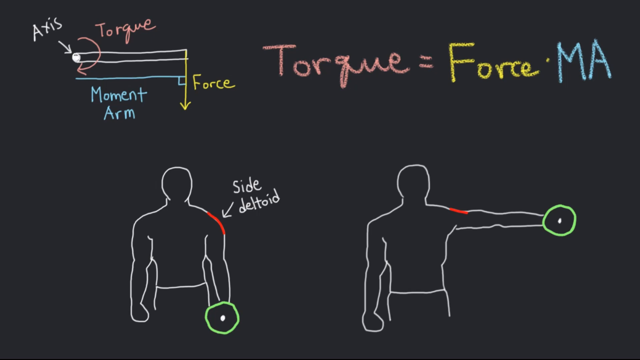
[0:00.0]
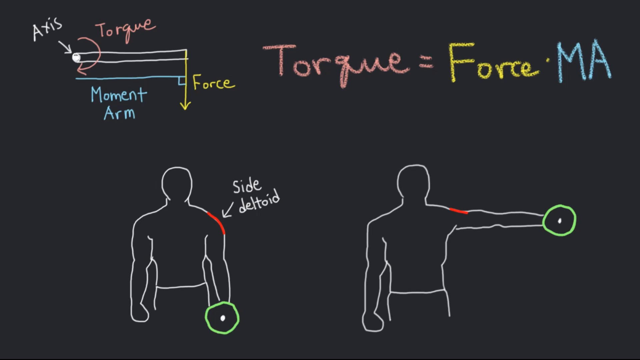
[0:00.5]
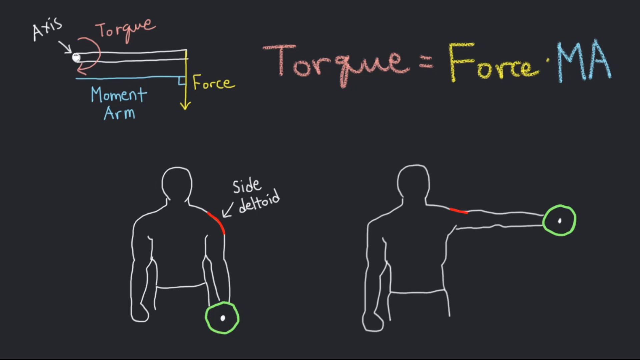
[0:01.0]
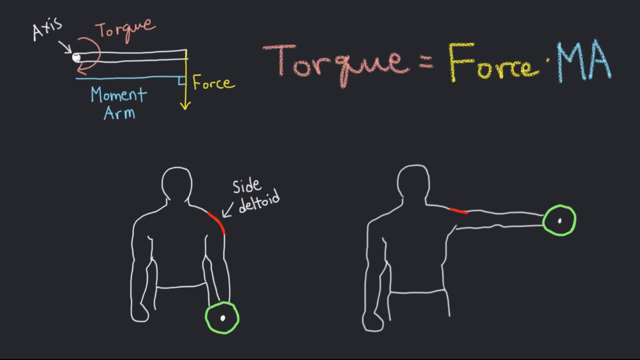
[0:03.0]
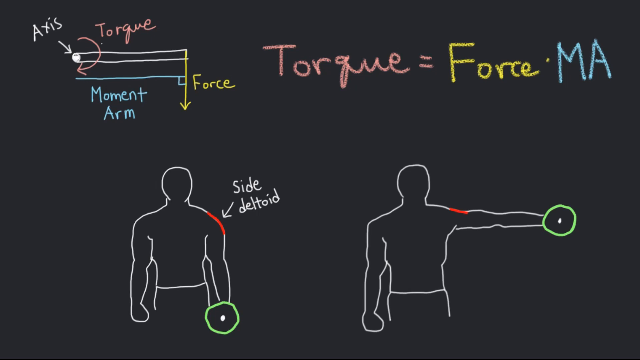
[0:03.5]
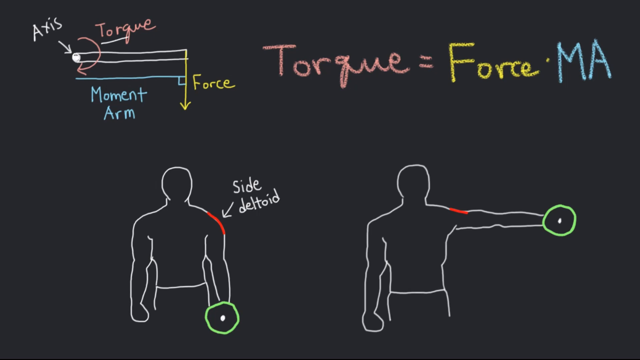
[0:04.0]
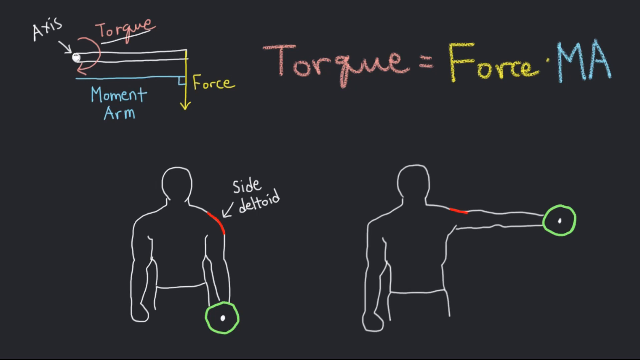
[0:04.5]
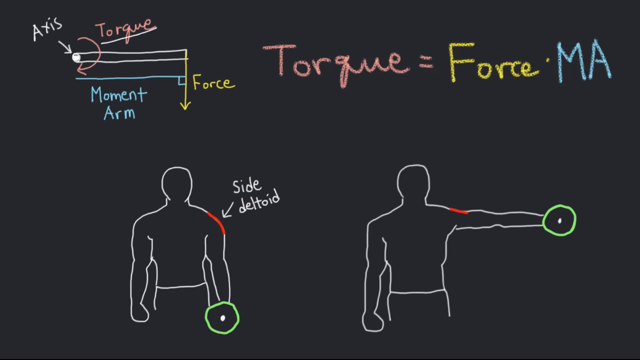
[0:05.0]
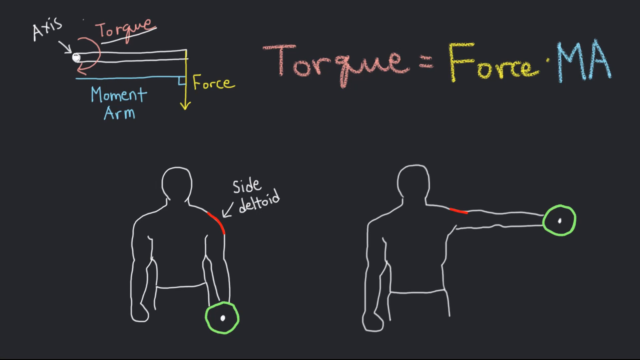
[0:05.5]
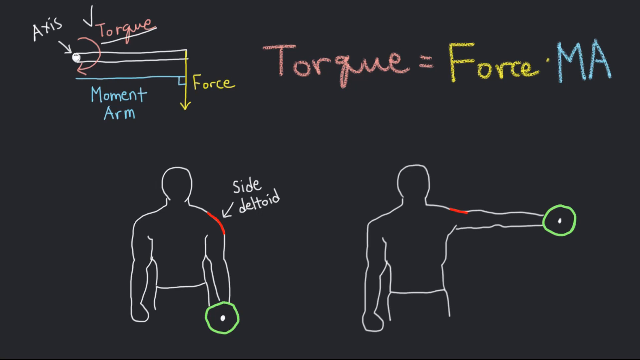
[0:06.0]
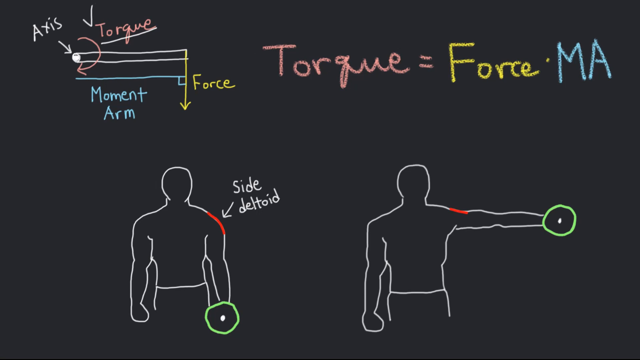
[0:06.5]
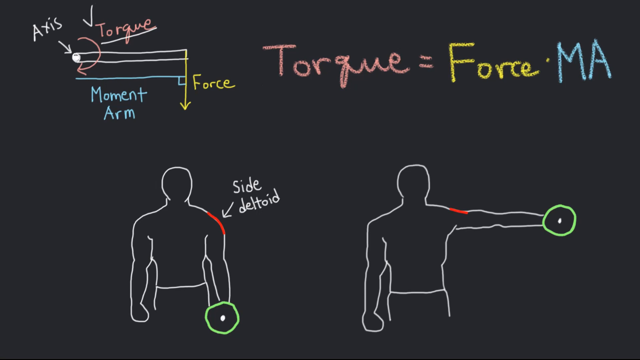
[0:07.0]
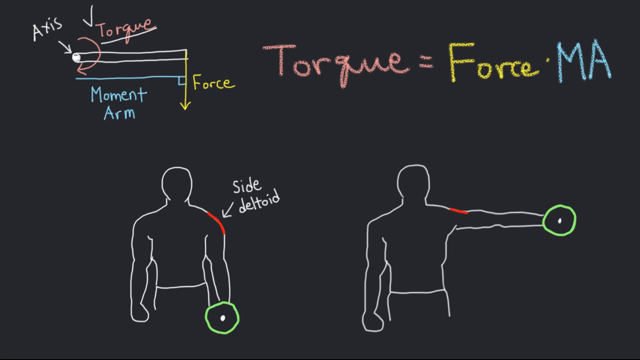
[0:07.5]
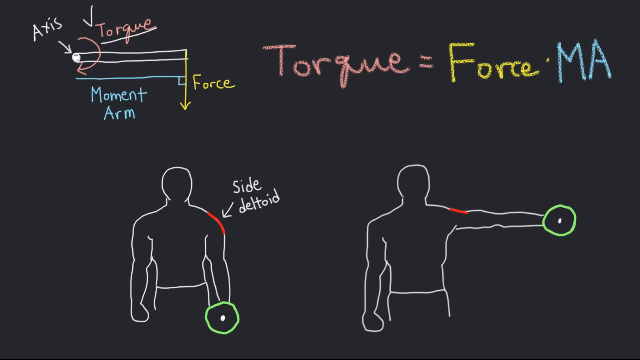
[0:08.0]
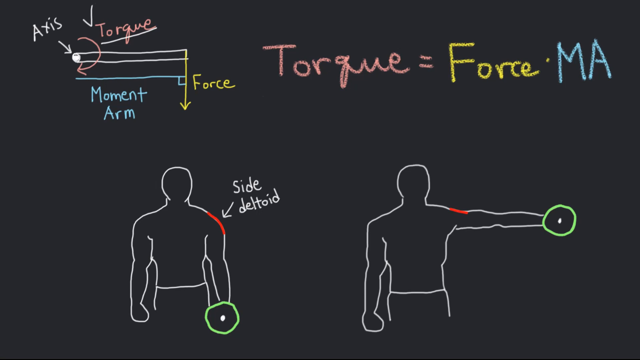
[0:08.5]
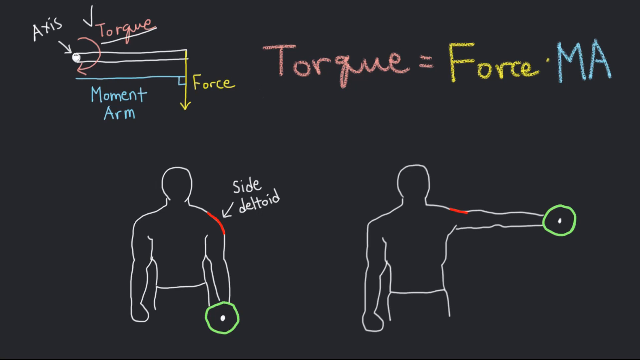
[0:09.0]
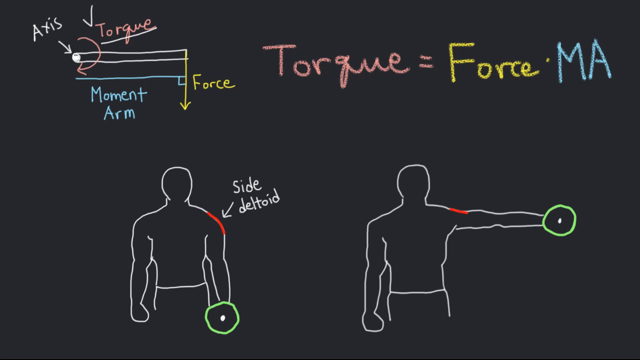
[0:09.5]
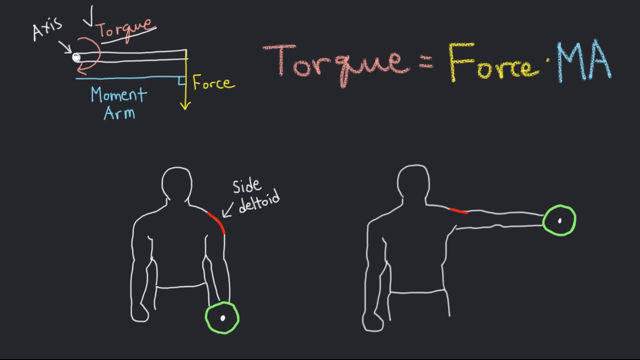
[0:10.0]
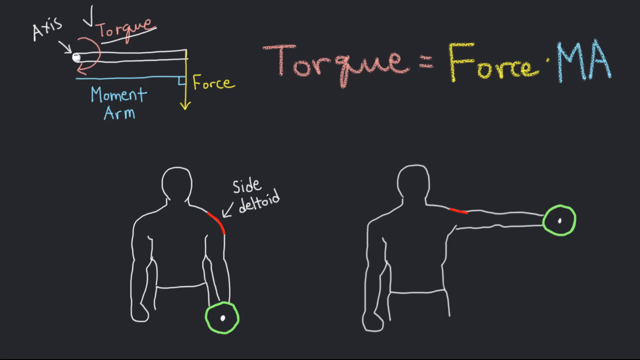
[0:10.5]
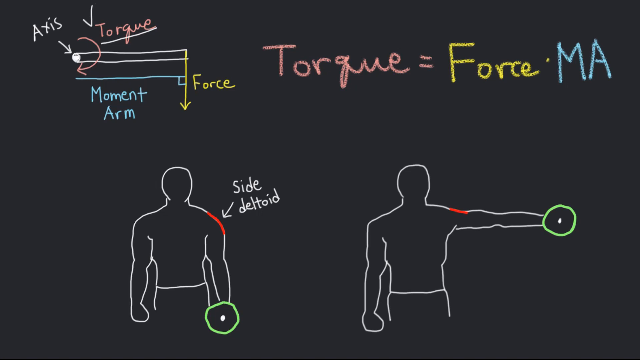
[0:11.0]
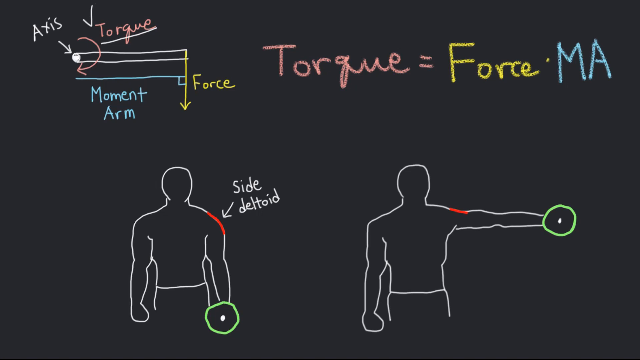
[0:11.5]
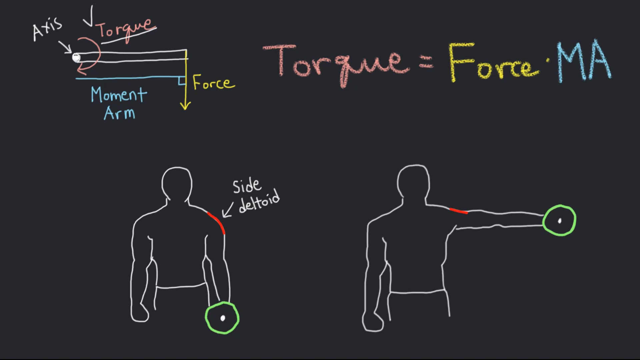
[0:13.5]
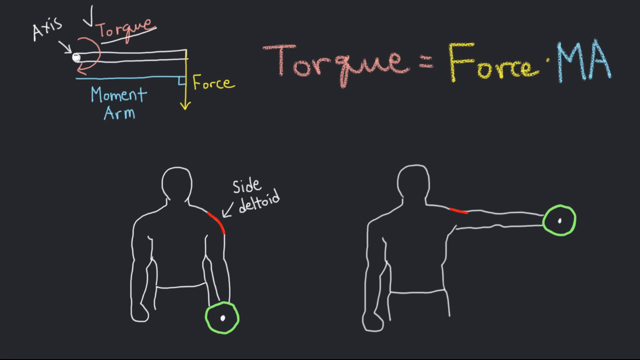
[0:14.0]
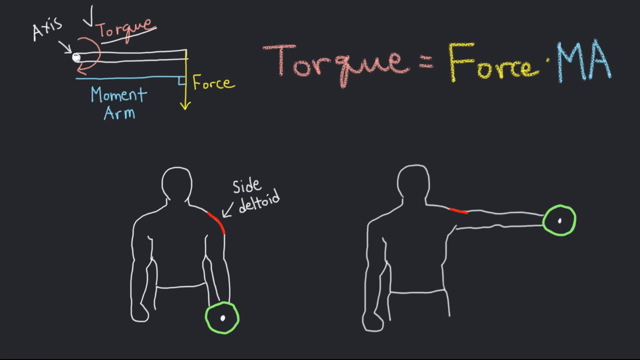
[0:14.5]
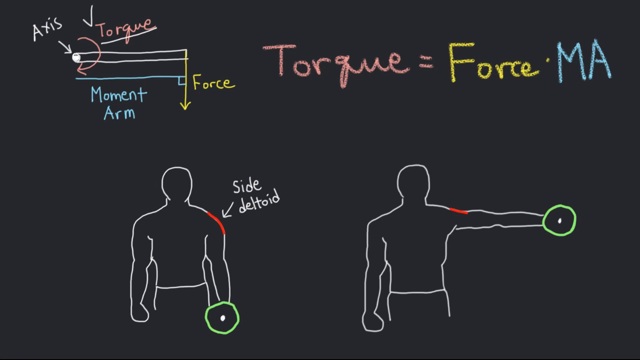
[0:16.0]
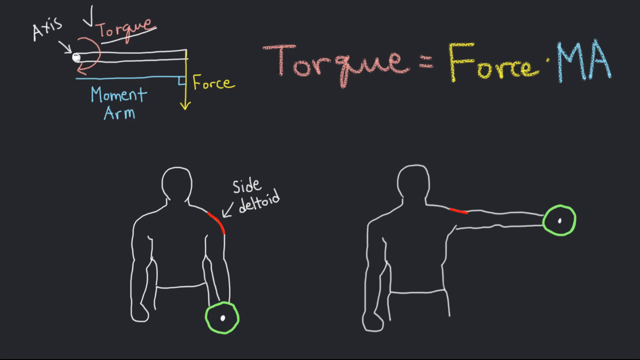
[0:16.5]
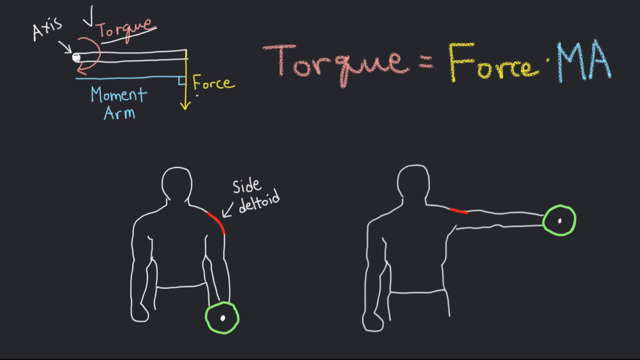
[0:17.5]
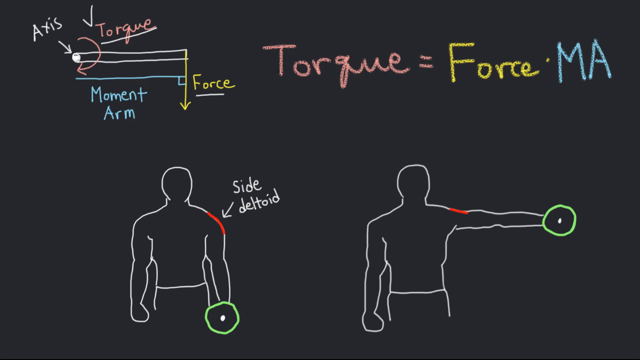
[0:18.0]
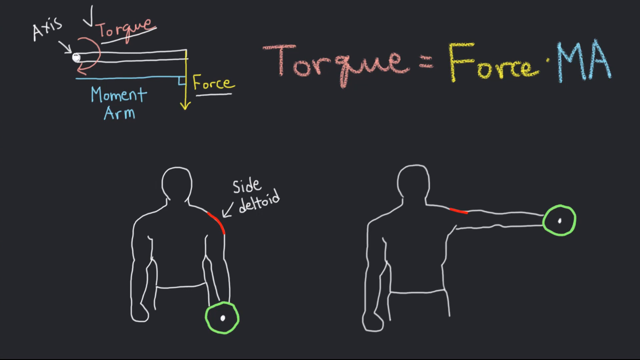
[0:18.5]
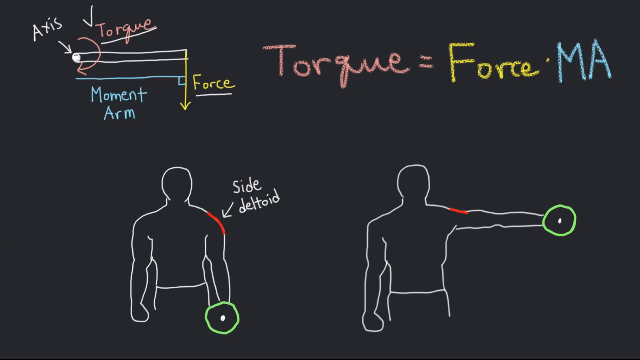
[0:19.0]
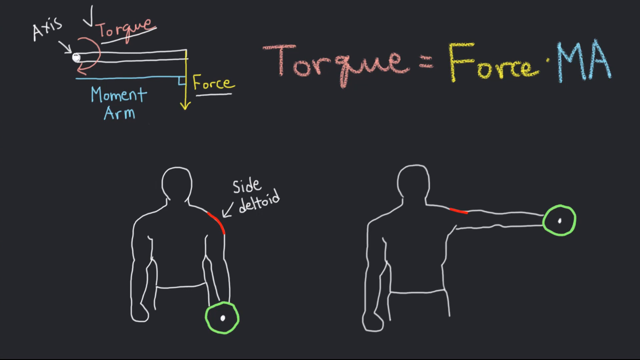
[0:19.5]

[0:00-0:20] A blackboard has words already drawn on it about axis and torque, apparently in chalk; it is handwriting, not type of any kind. The chalk is multicolored: white, pink, yellow, blue and green. At the top is a diagram for torque, axis, moment arm and force, followed by a formula that says "torque equals force times ma". At the bottom are two figurines or silhouettes of people. An arrow points to one, labeled "side deltoid", and he is holding maybe a circle, possibly a weight. The person on the right holds his arm outstretched with a circle in his hand, maybe a weight he is holding up, and a red highlight marks the side deltoid on his shoulder. "Torque" in the top left is underlined with a check mark. Apart from that there does not appear to be any other motion; it is essentially a still of the diagram.